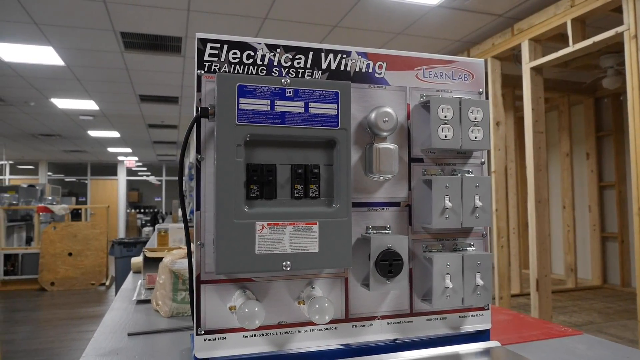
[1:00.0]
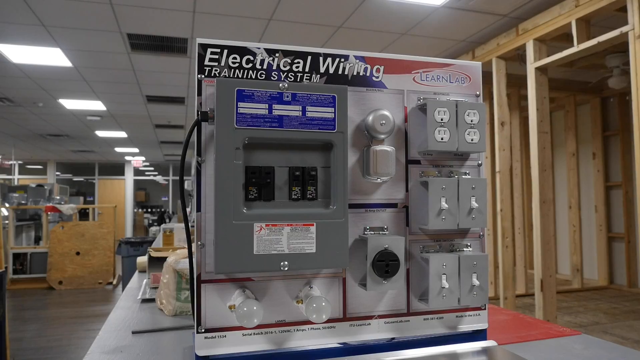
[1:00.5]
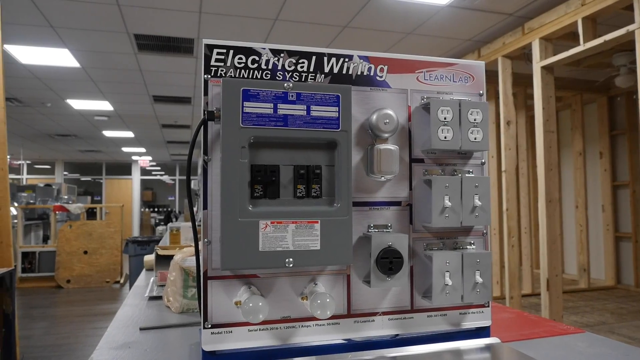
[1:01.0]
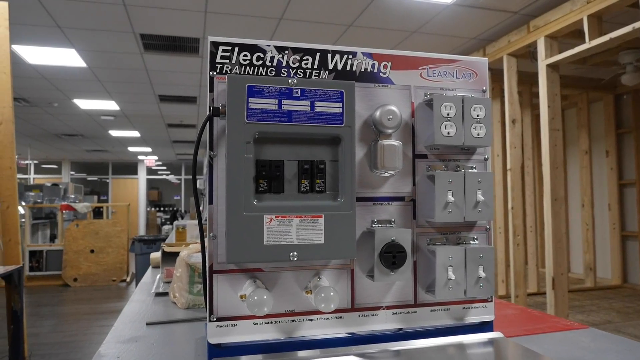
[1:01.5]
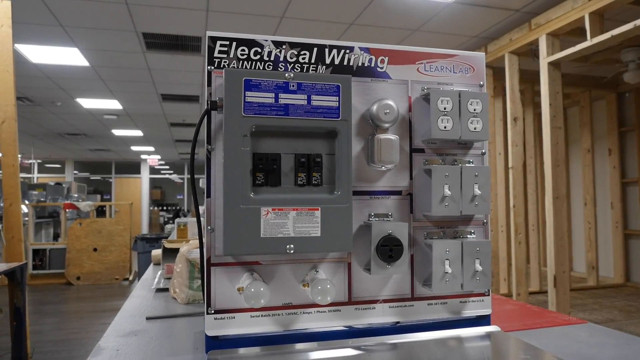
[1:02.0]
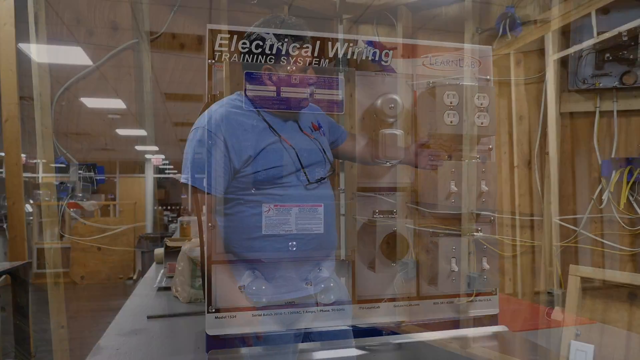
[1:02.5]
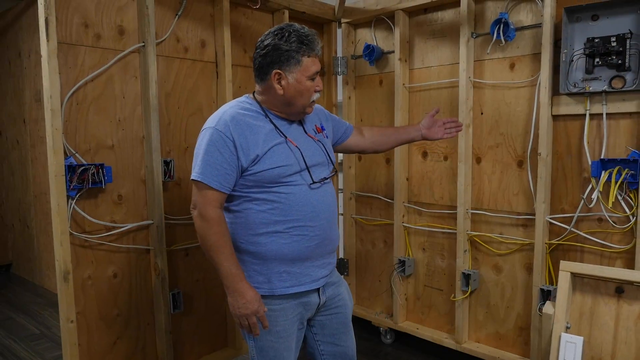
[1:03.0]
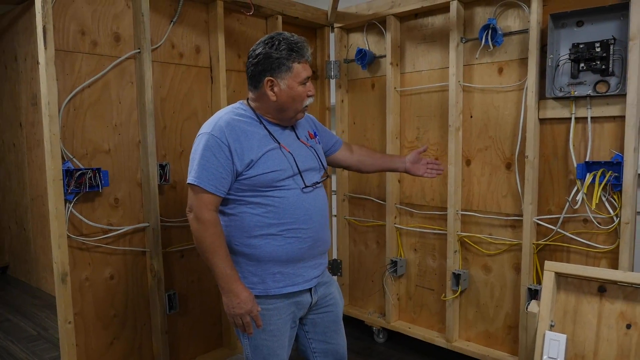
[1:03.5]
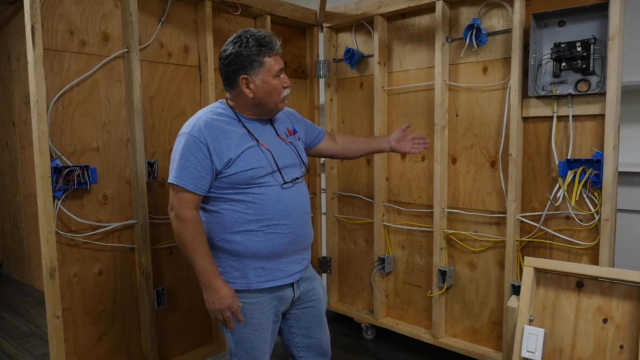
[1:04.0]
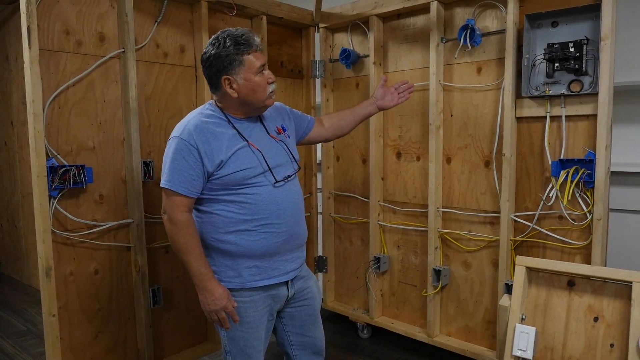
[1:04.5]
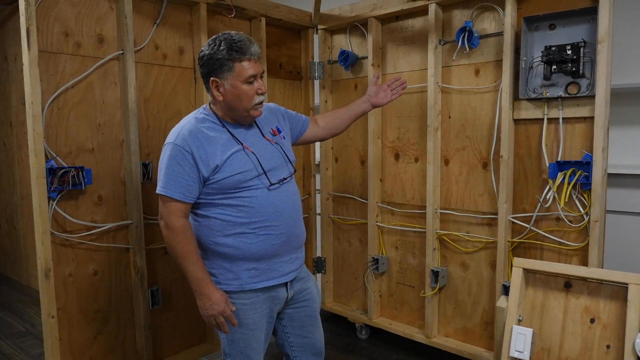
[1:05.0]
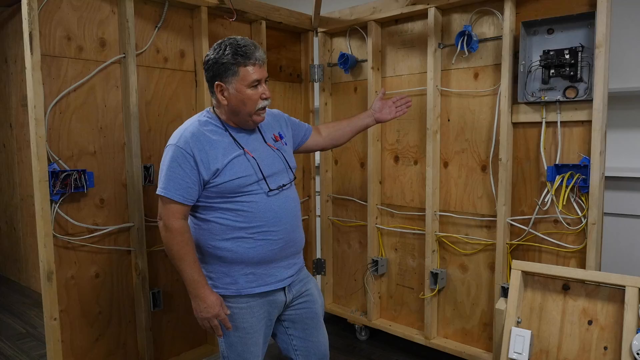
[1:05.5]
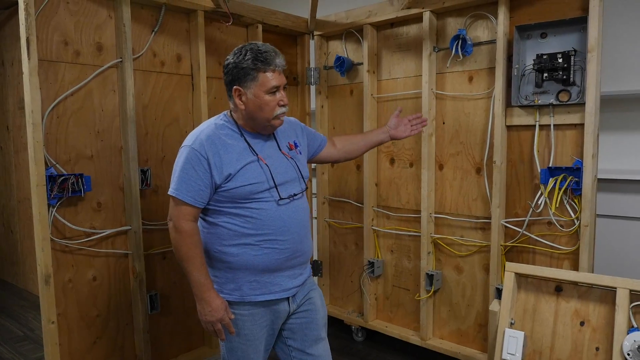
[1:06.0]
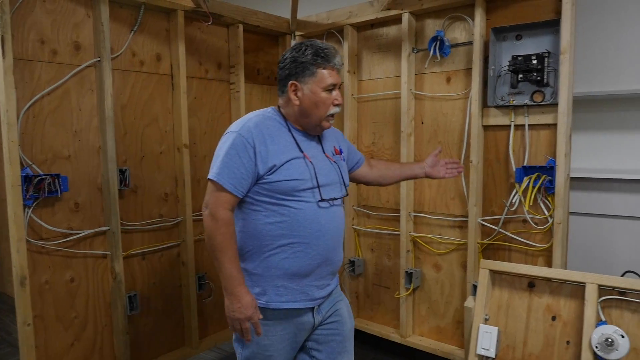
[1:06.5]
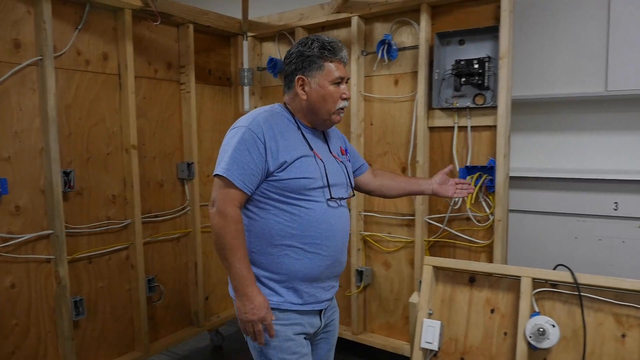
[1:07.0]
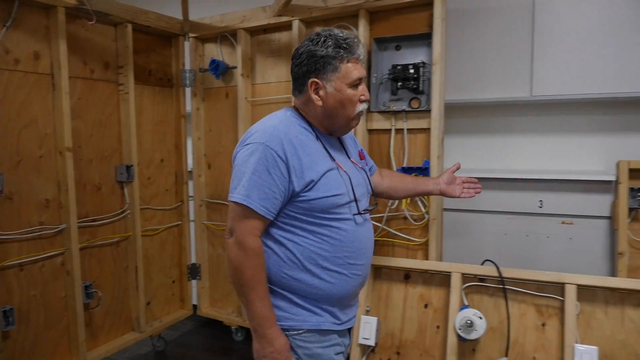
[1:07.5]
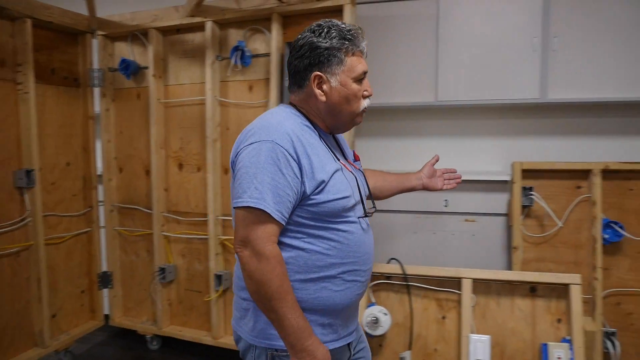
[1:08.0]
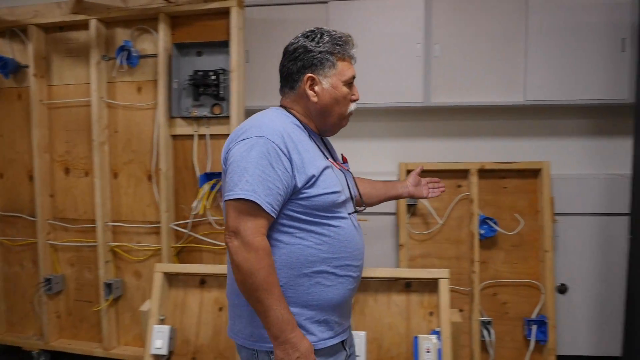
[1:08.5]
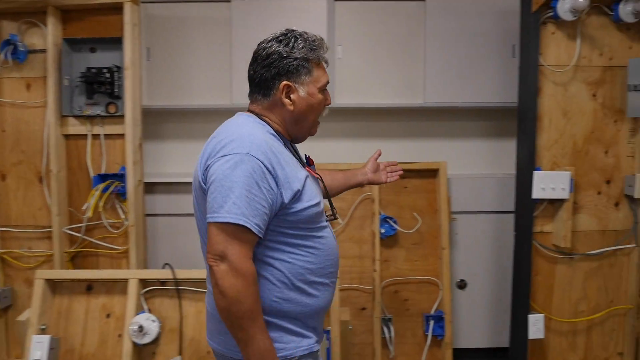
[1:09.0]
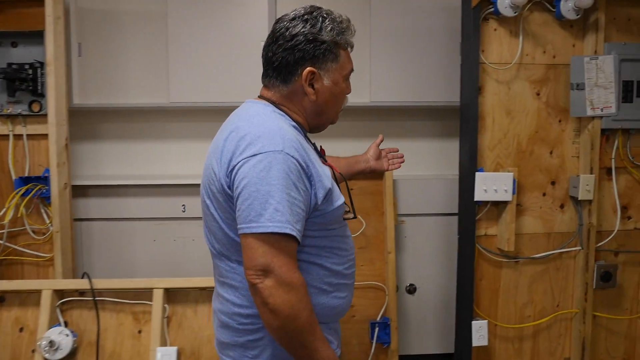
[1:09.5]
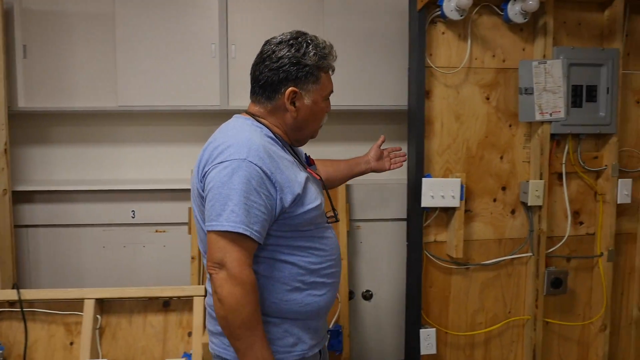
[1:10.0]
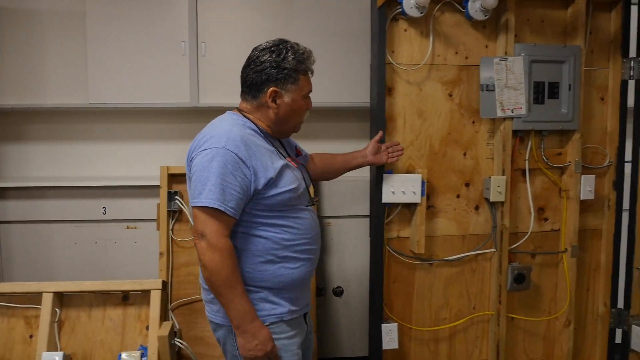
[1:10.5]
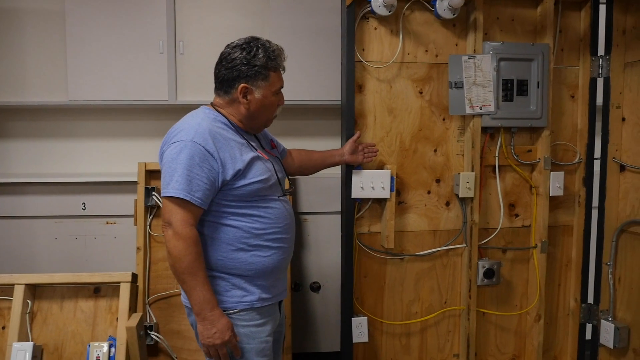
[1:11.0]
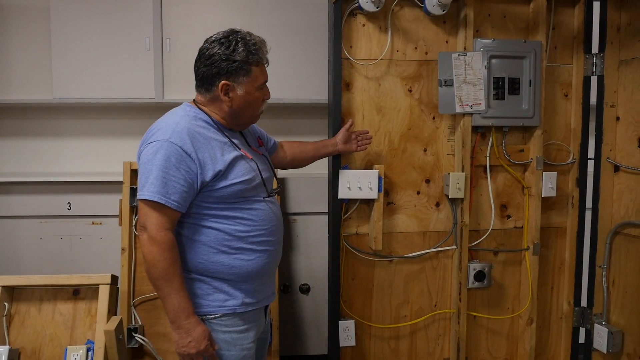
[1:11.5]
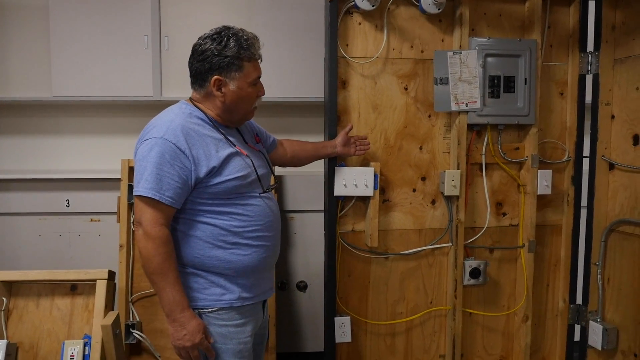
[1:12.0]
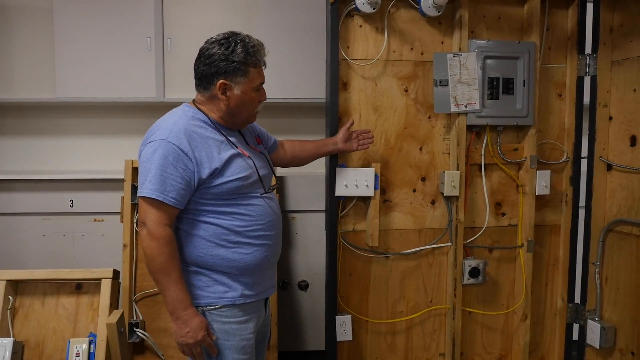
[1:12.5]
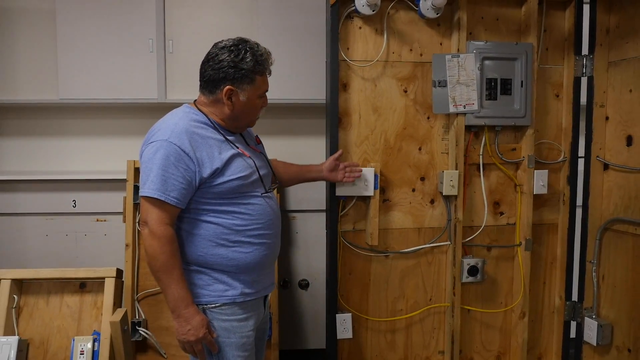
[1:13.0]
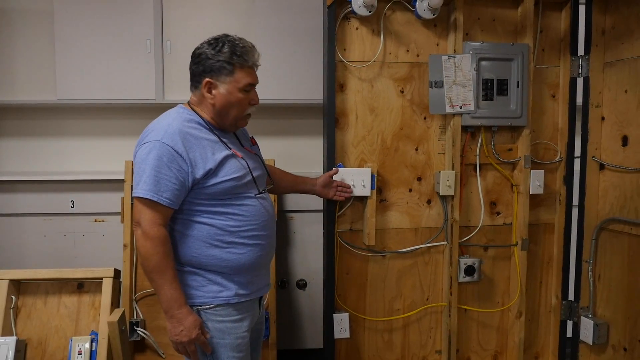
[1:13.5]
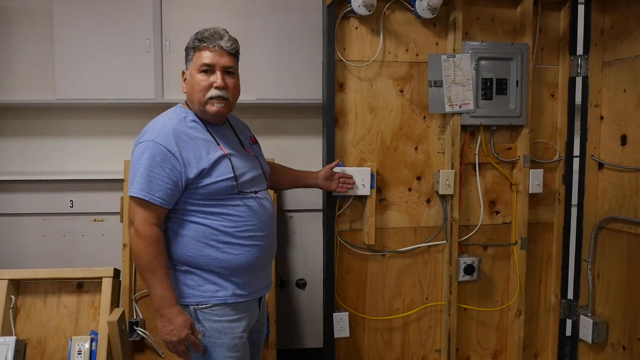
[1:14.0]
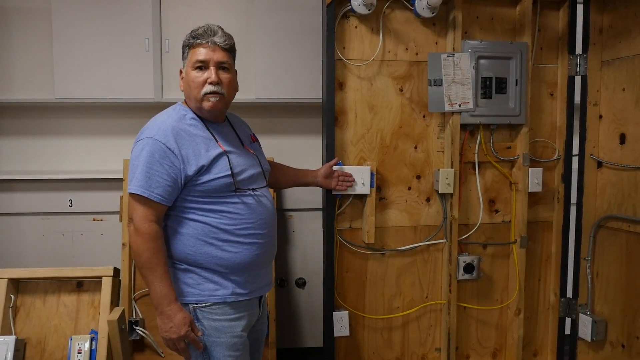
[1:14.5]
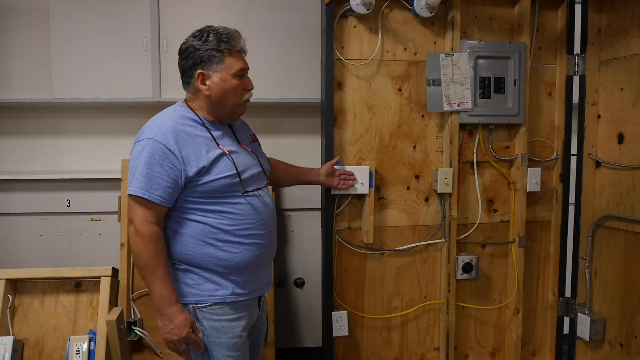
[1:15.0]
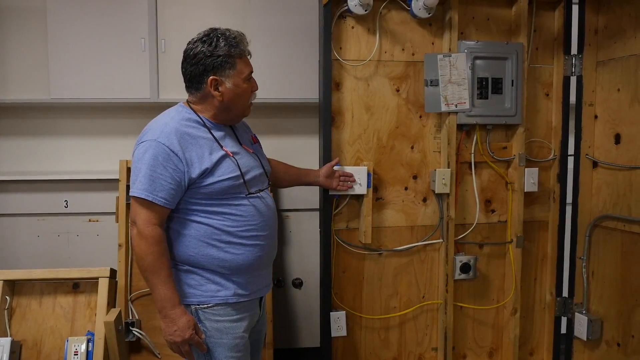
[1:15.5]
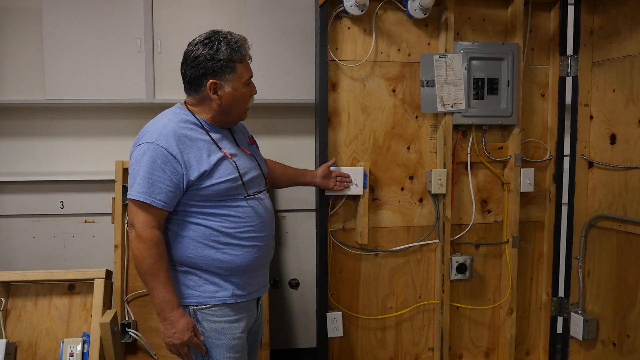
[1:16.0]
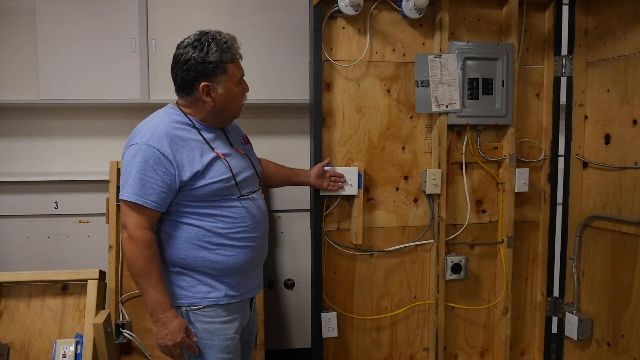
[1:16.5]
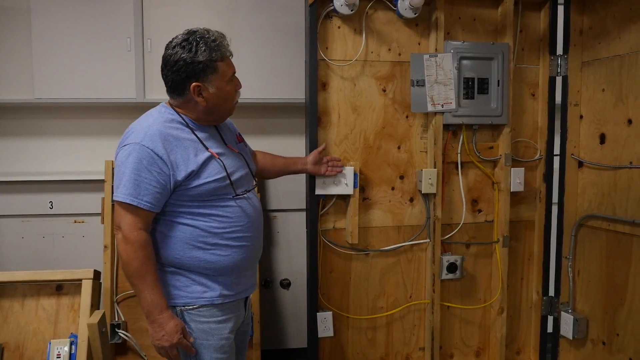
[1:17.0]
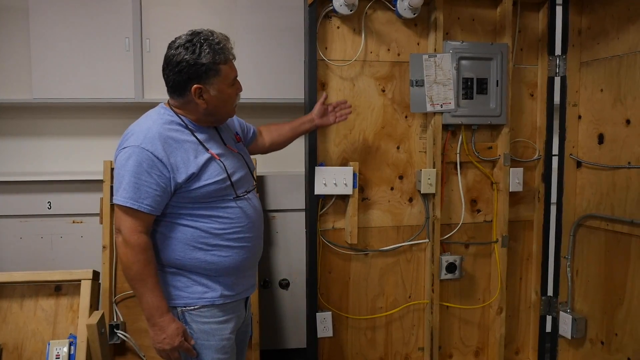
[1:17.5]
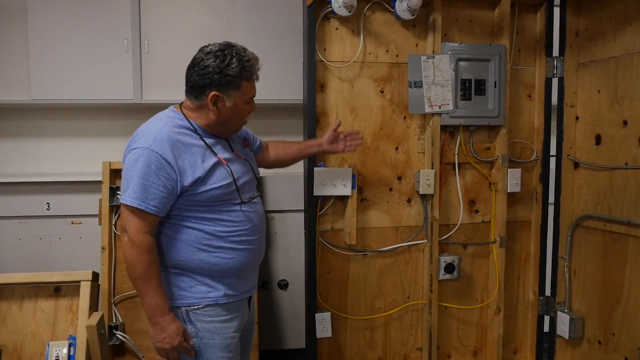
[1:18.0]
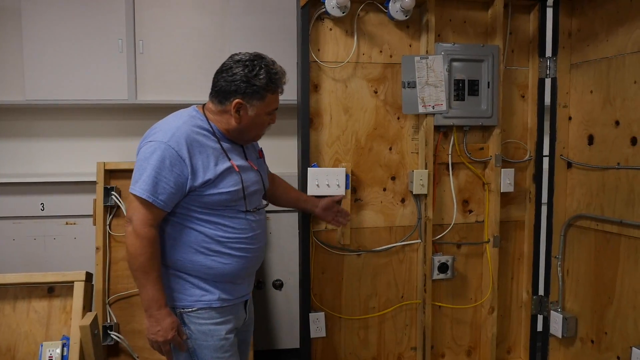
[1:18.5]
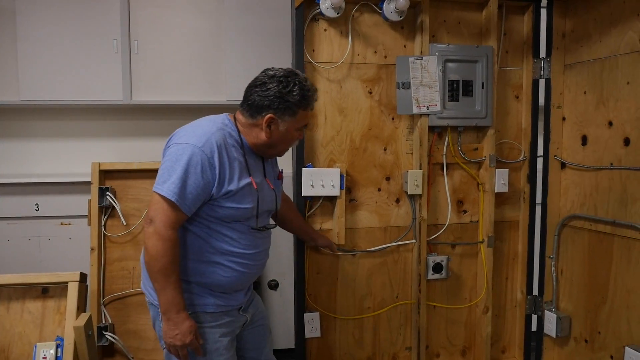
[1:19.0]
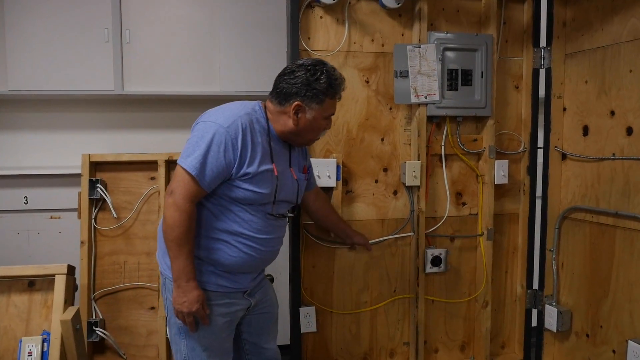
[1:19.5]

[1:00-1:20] The video zooms out on the electrical wiring, showing every component. It then shifts to the man, who points at and describes the electrical appliances, with electrical wires running through the room connecting different equipment and appliances. He points at a circuit, a double ground circuit, and at a cable, using his left hand to point at the equipment and appliances as he explains the wiring.